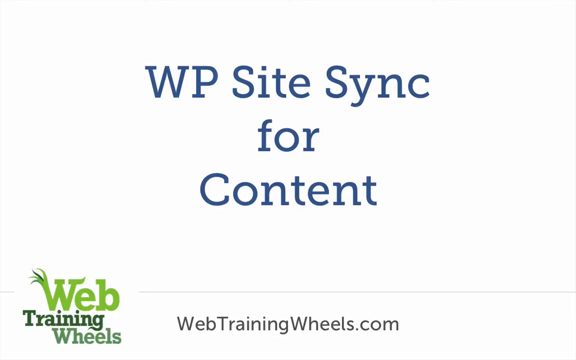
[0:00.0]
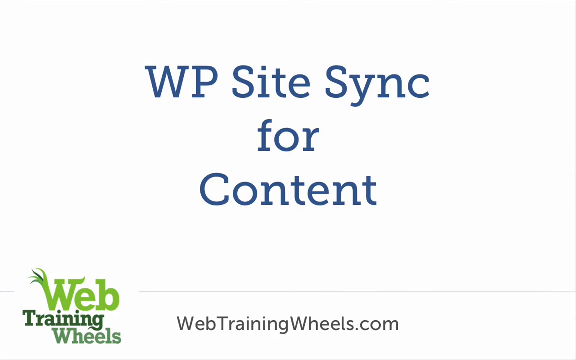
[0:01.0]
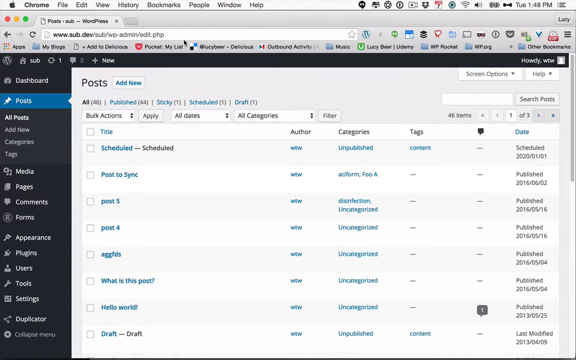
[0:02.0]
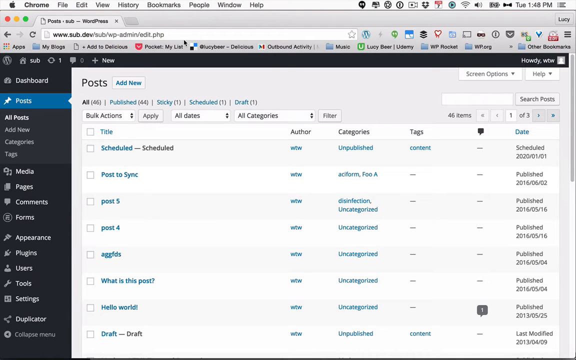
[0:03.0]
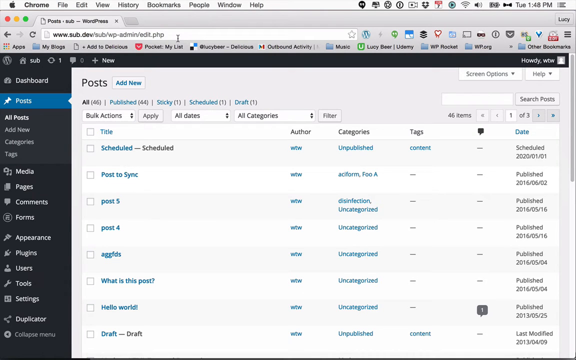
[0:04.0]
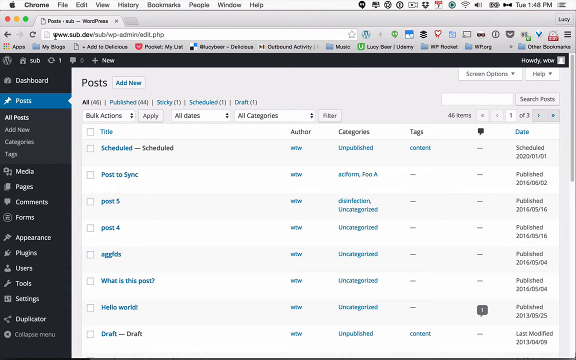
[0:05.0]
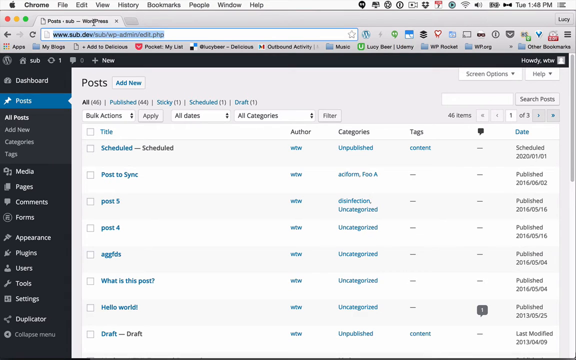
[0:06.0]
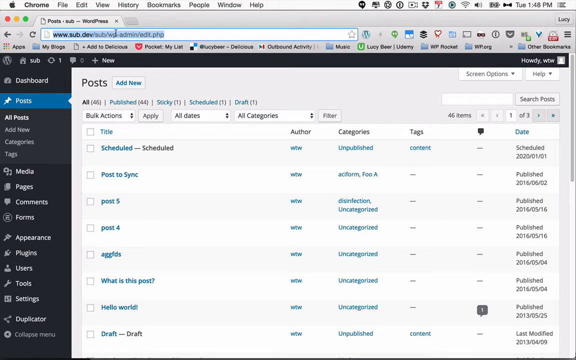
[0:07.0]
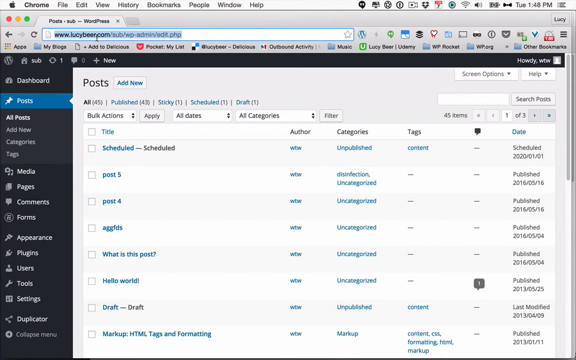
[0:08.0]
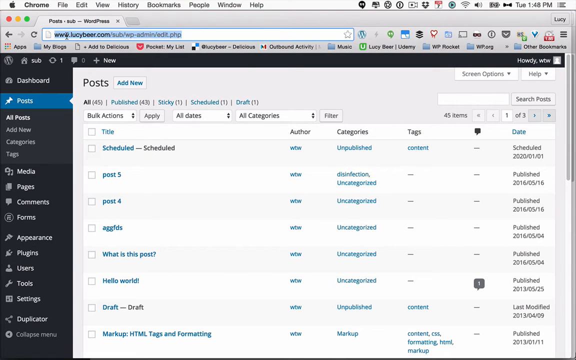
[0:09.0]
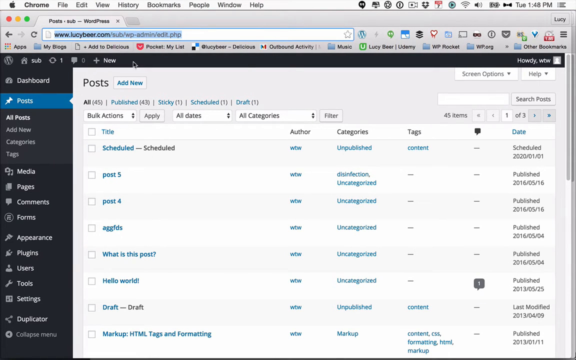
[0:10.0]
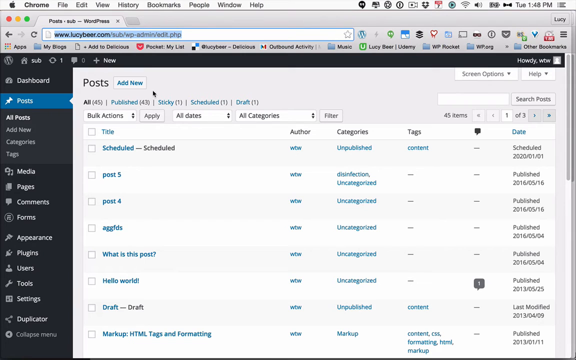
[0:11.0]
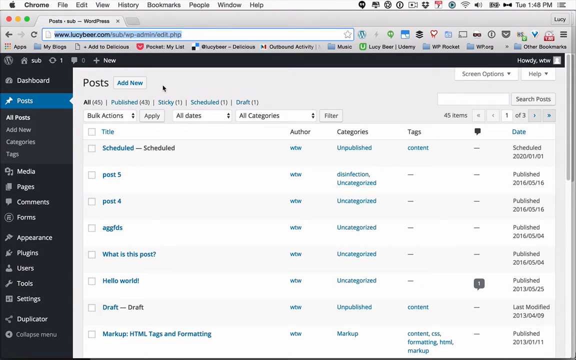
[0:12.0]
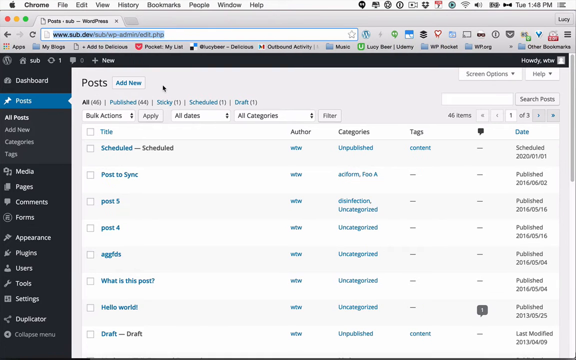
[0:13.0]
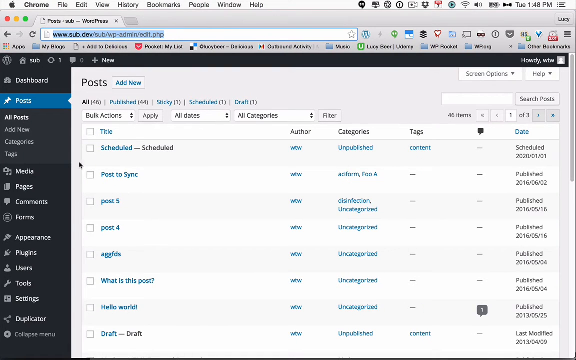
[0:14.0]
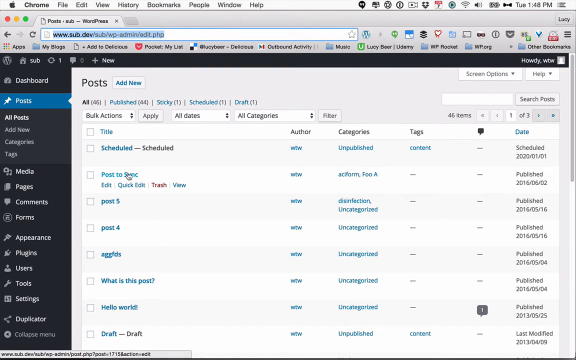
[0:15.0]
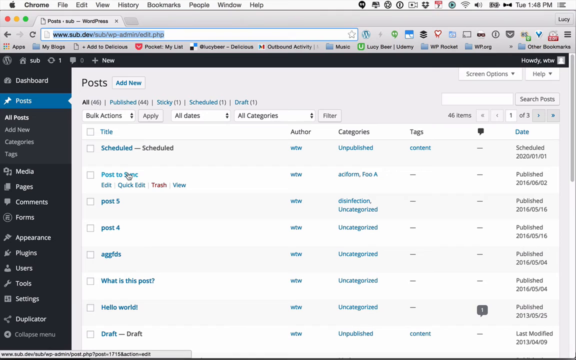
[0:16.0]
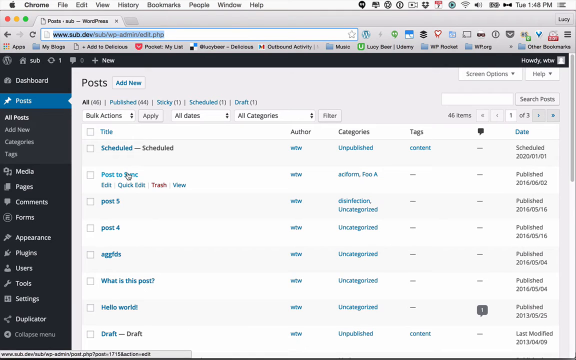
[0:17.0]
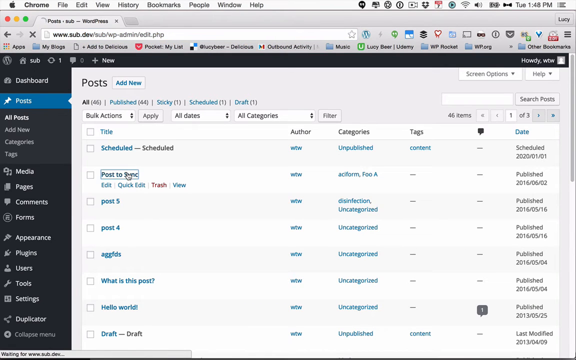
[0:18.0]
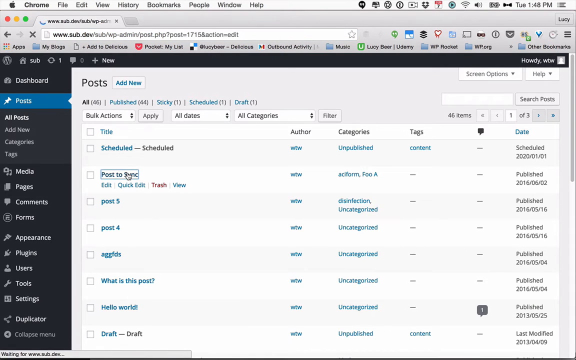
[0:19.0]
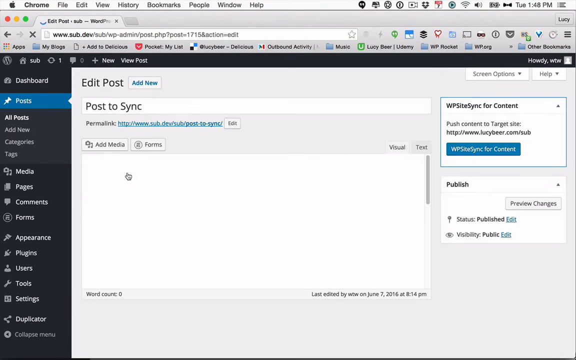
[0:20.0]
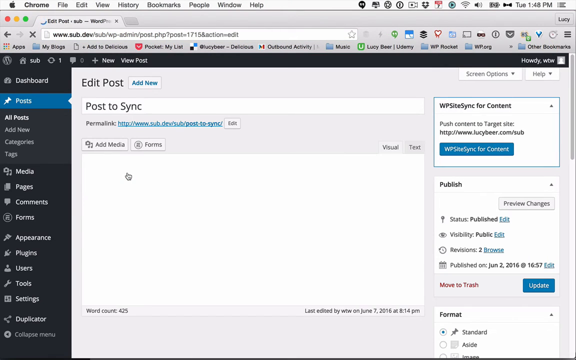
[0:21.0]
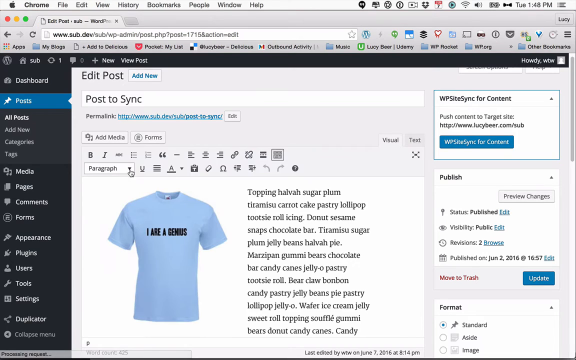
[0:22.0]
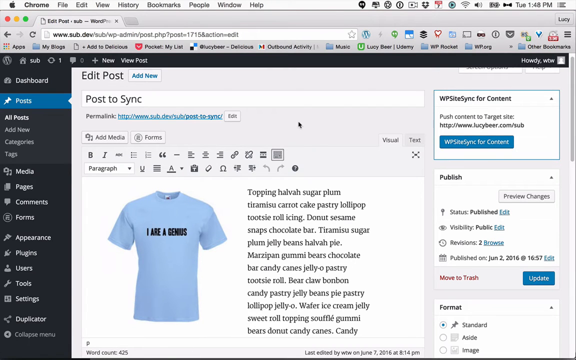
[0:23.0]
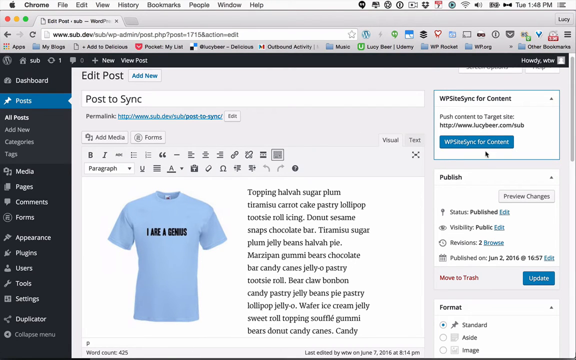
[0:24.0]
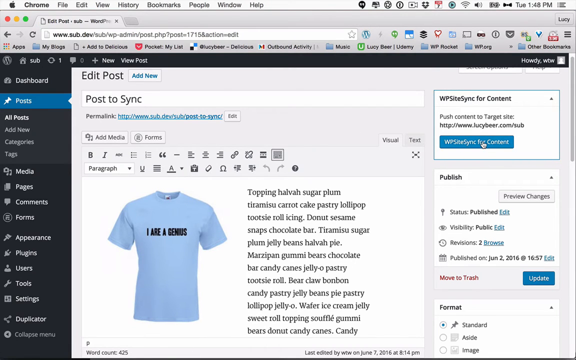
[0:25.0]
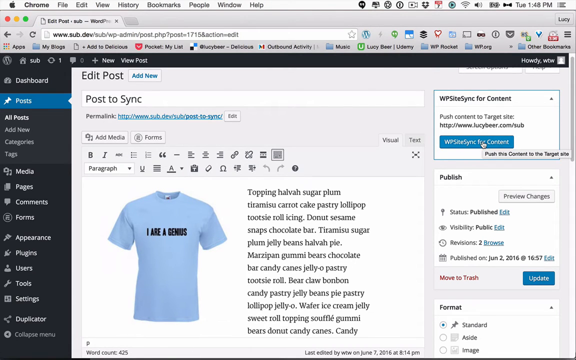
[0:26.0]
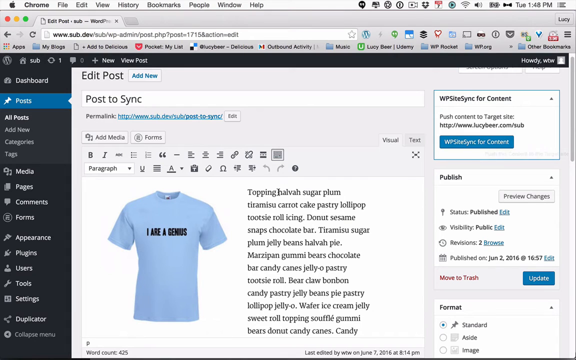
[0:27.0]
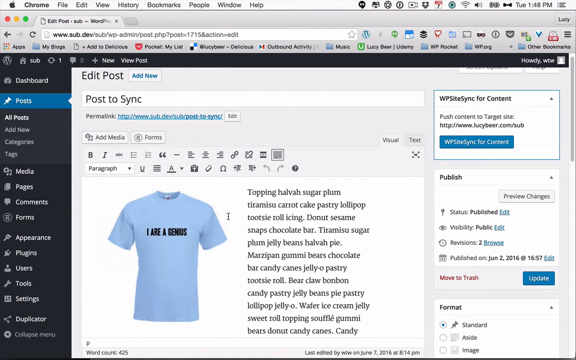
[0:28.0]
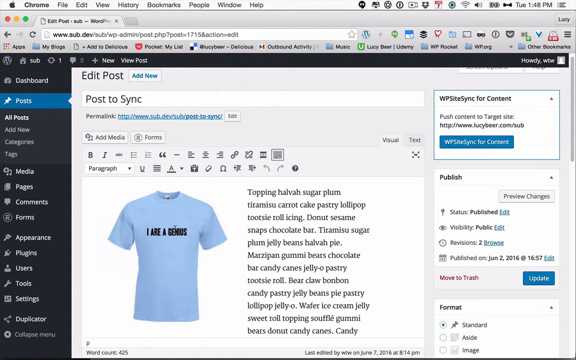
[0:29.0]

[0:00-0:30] A white screen shows the blue text "WP Site Sync for Content." In the lower left, "Web Training" appears in red and "web training wheels" in green, and at the very bottom of the screen "webtrainingwheels.com" appears in black text. A computer site then comes up with a gray background that is a little hard to see. The person, whose identity is unclear, goes up to the top search bar and clicks "Post to Sync." A new browser pops up and brings up a T-shirt; it apparently involves writing on a T-shirt, though this is unclear.